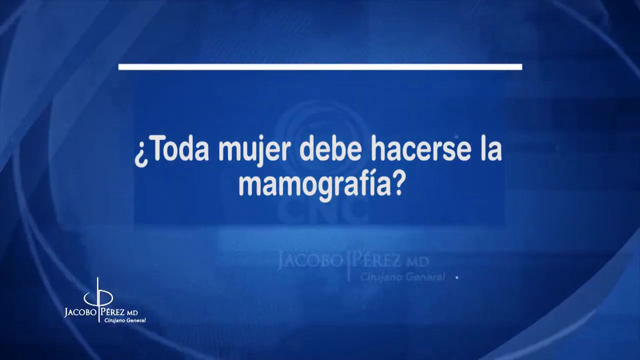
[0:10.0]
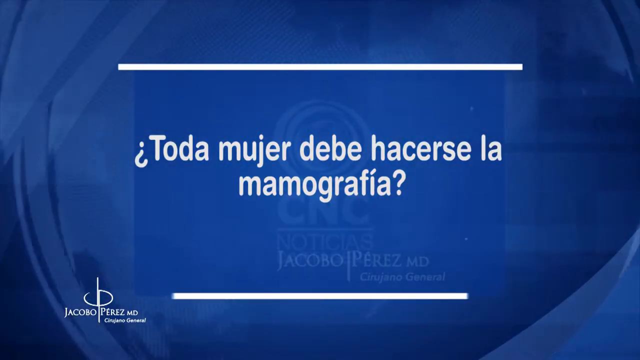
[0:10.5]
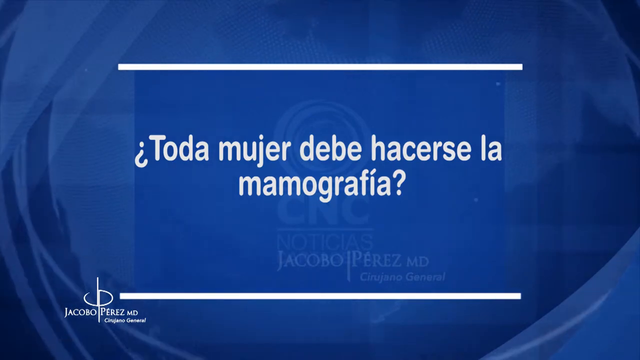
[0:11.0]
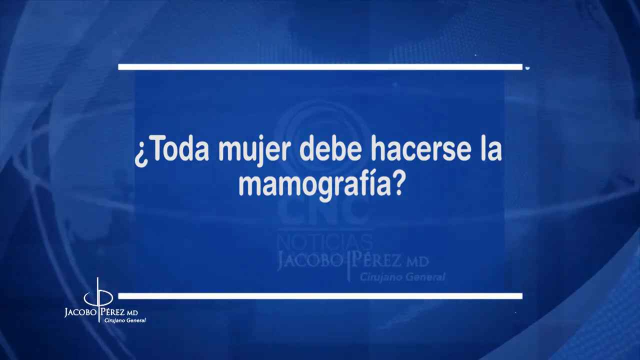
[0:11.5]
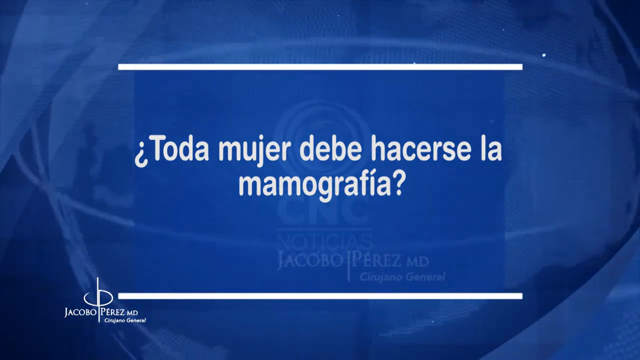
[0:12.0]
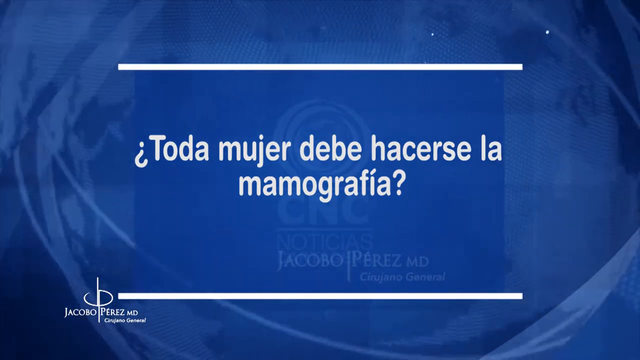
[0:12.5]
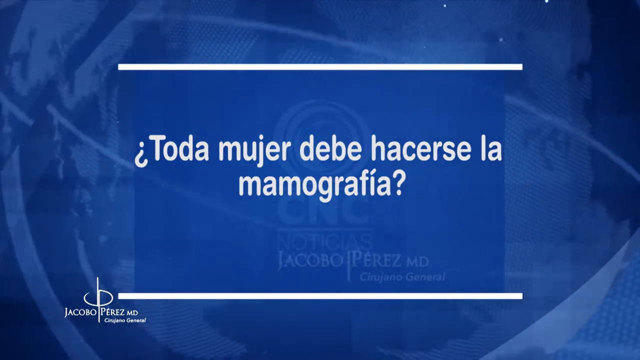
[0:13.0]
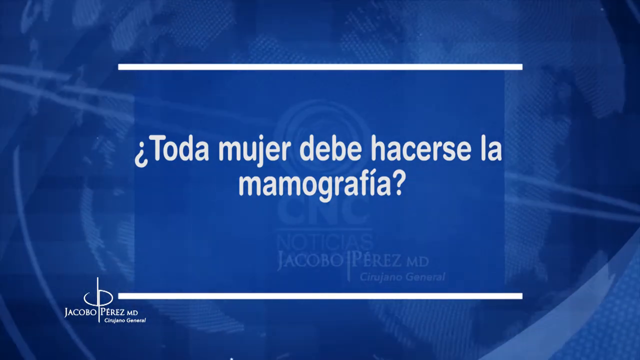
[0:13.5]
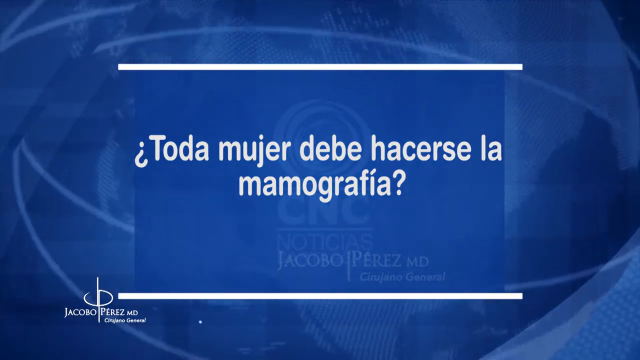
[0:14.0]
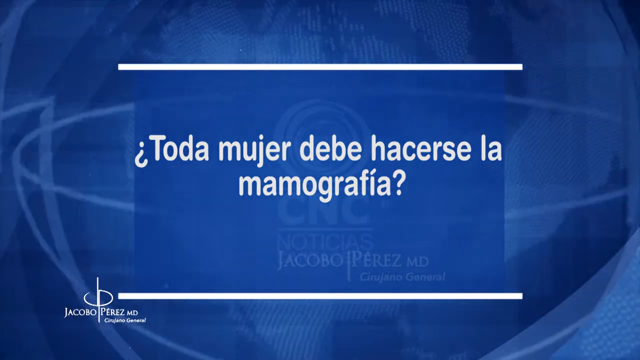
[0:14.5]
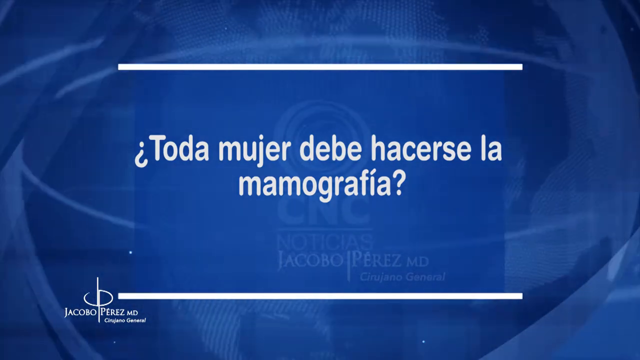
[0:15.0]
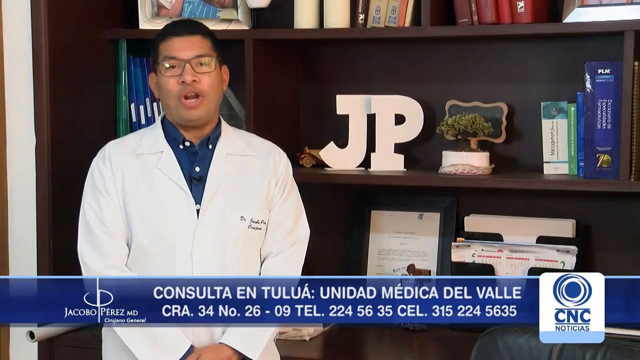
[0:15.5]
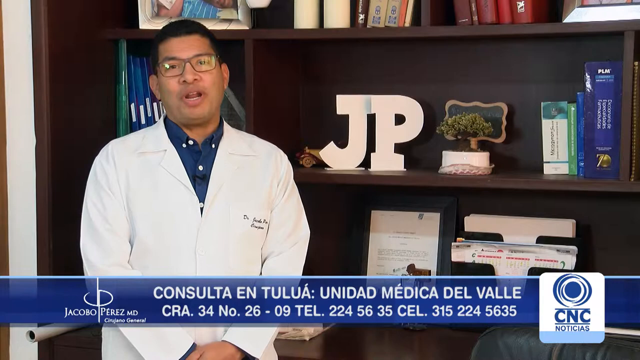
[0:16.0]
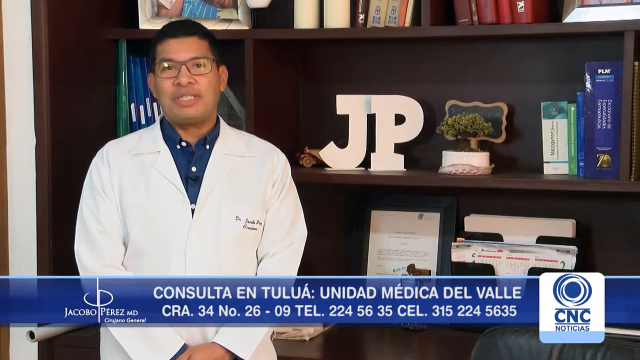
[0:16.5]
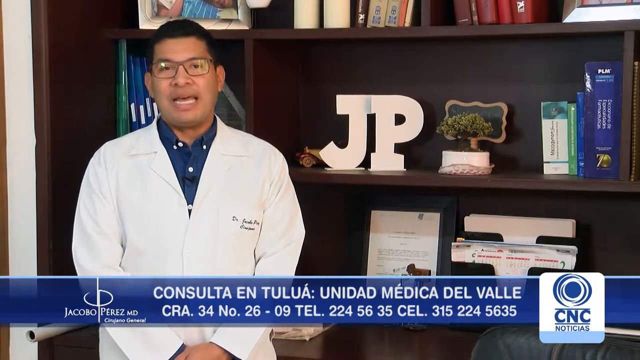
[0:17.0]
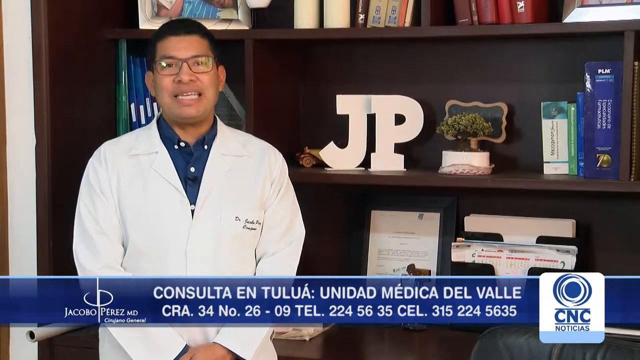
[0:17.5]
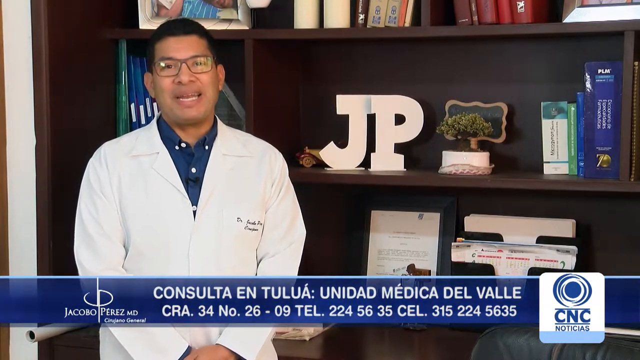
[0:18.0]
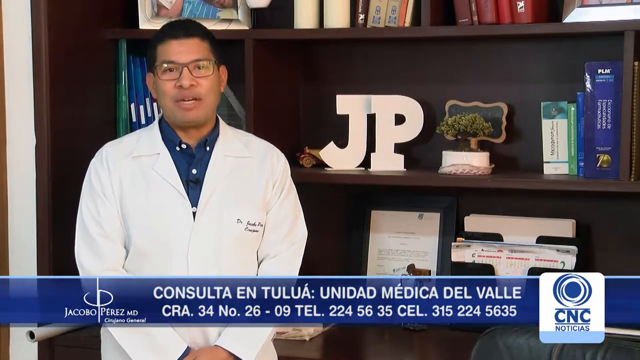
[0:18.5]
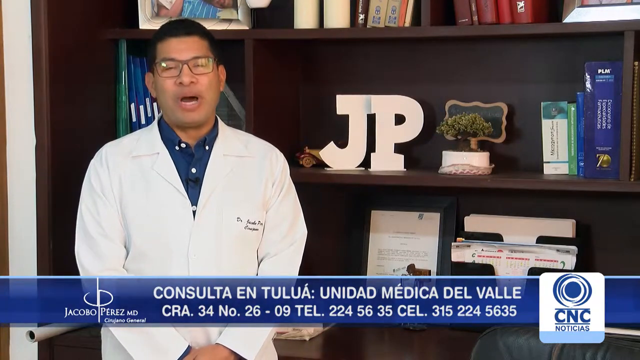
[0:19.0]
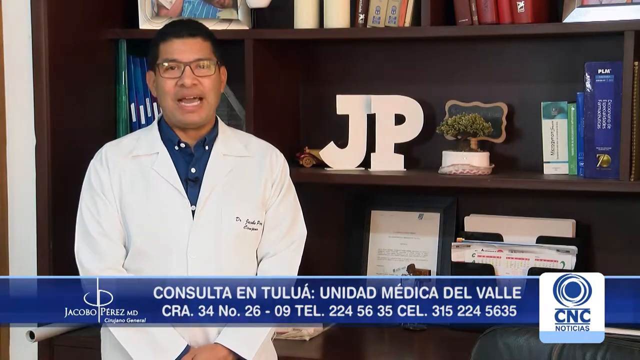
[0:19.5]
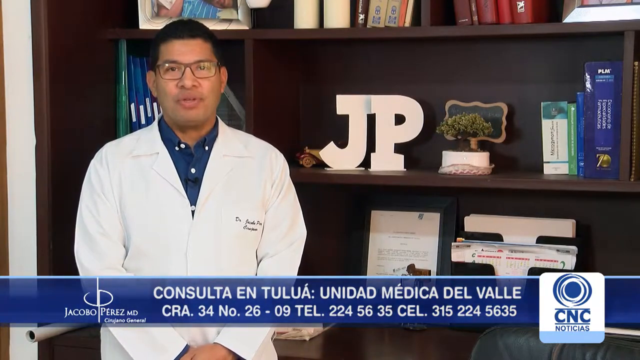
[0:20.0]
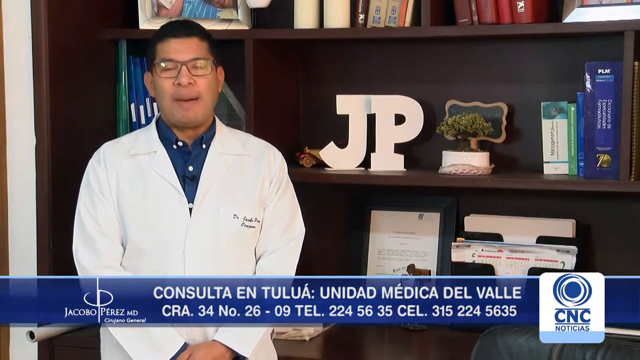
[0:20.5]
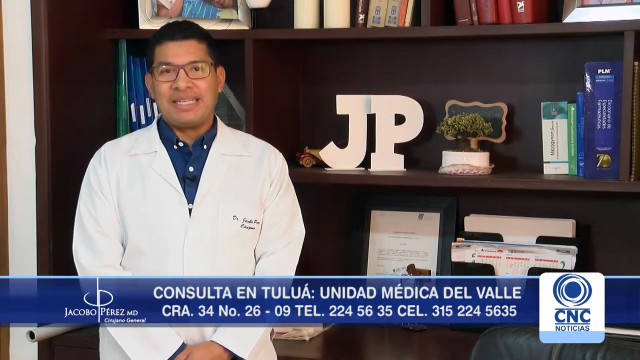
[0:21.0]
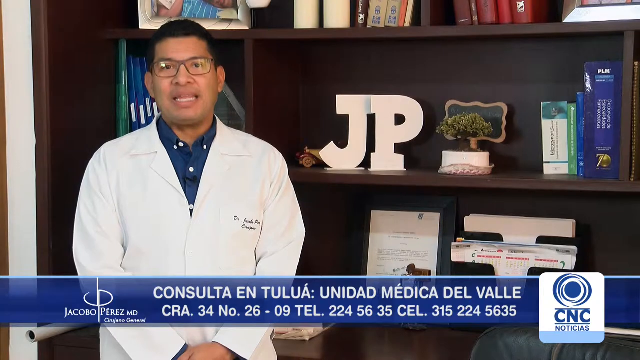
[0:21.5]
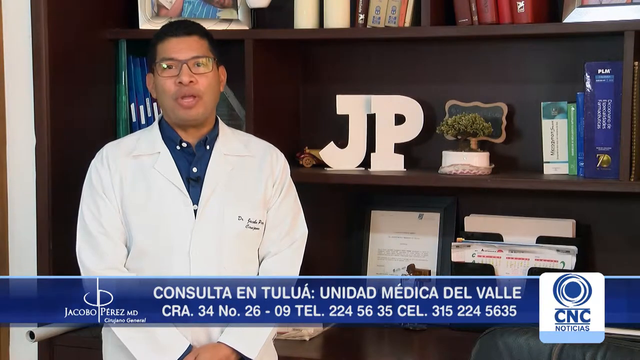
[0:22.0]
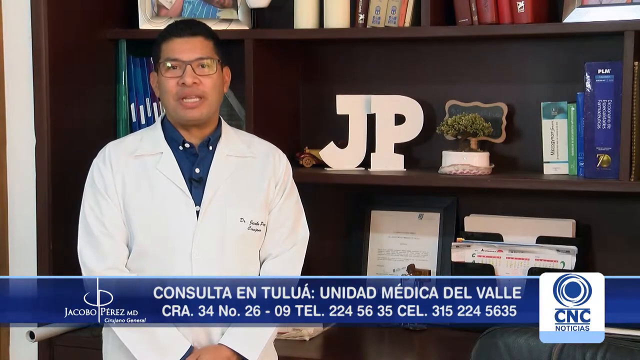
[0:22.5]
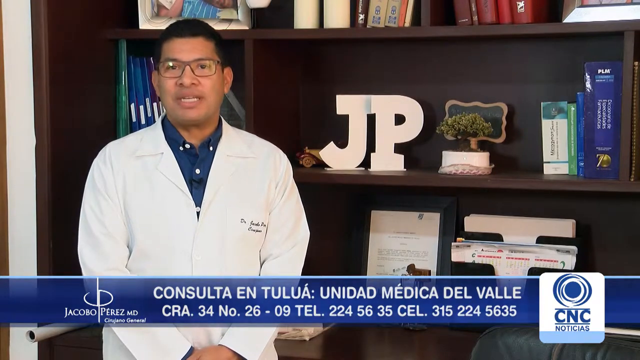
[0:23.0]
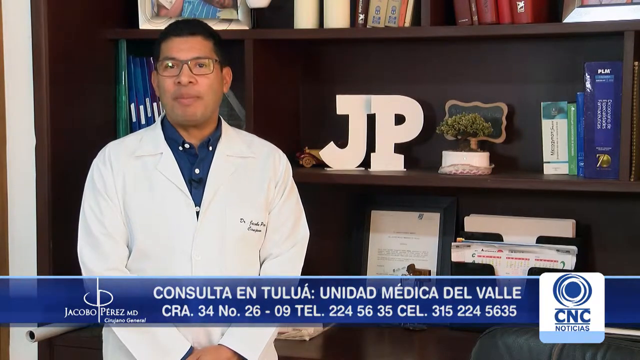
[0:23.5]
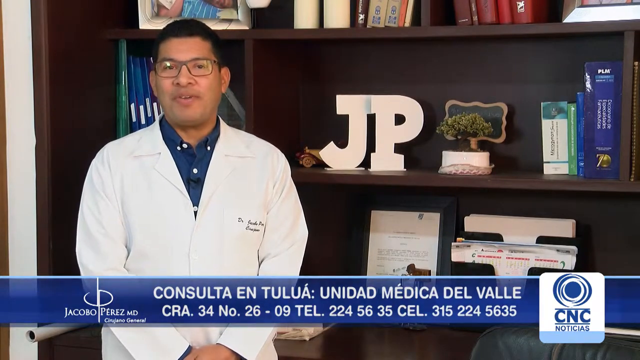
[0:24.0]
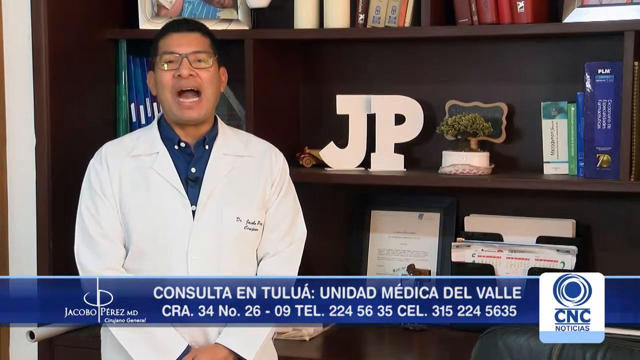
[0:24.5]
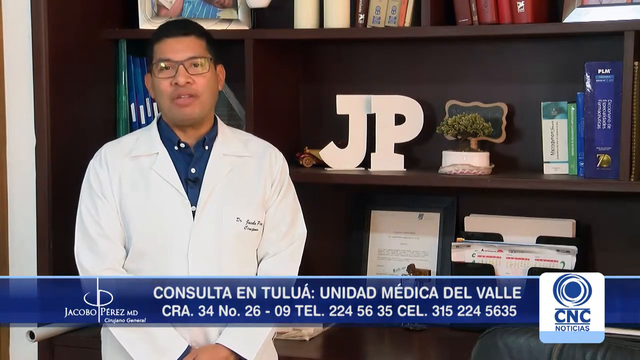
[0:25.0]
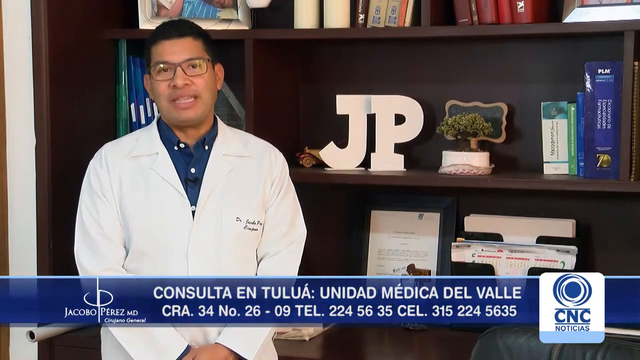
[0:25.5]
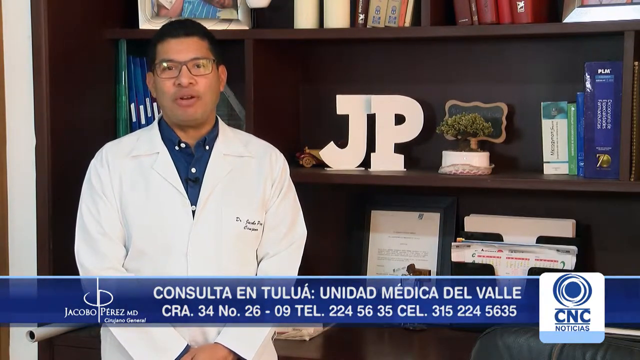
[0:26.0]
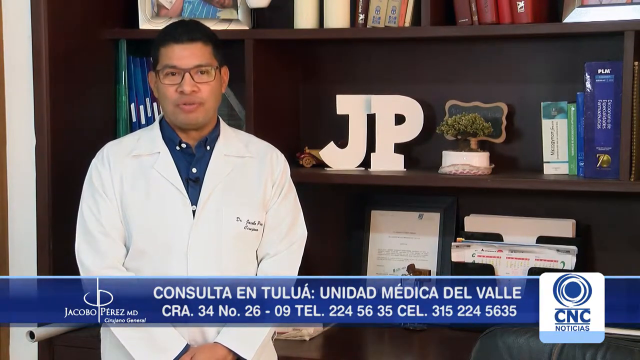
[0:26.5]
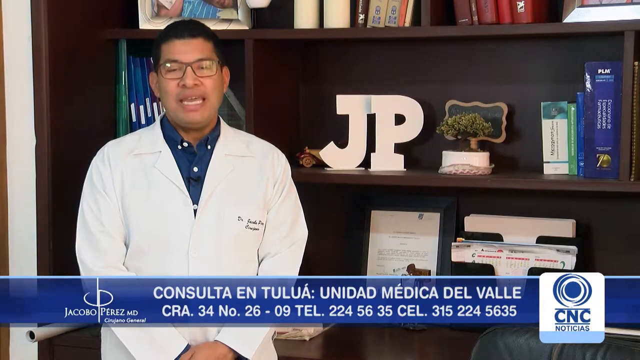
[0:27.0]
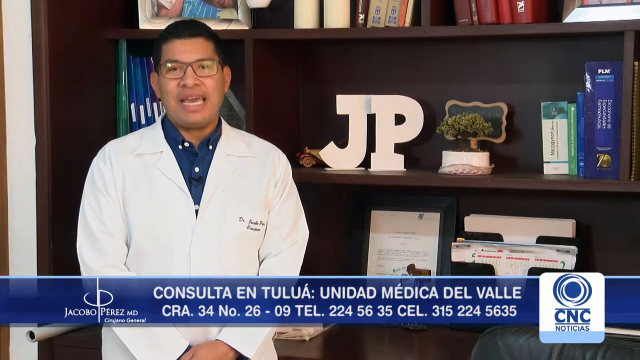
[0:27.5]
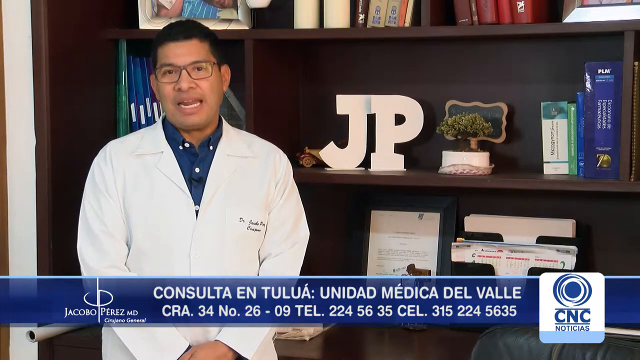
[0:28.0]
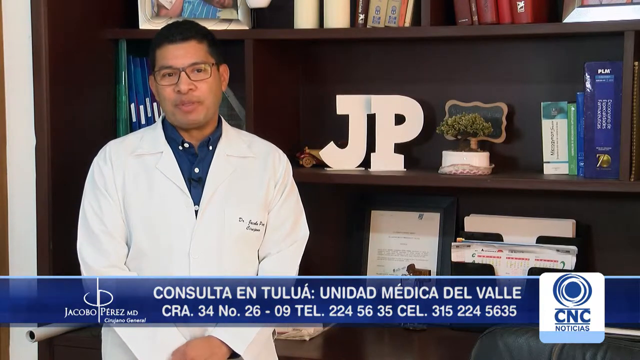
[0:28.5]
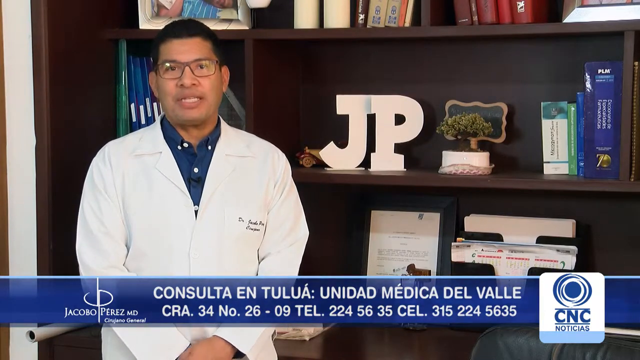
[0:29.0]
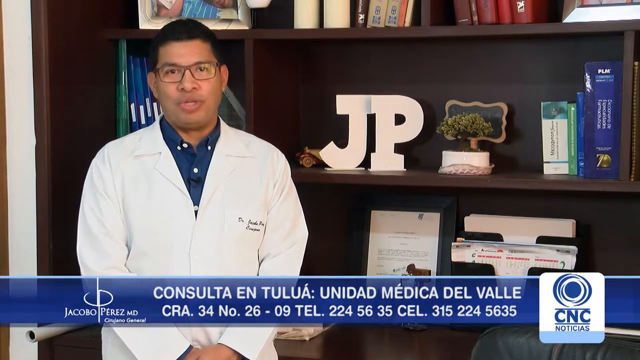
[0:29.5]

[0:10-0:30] Dr. Jacobo Perez, who has black hair and wears glasses, remains the main subject. He faces directly toward the camera and is speaking, seemingly addressing an audience. Next to him, apparently on his drawer, are the initials "JP" in big, bold white letters. There is also a big navy book.